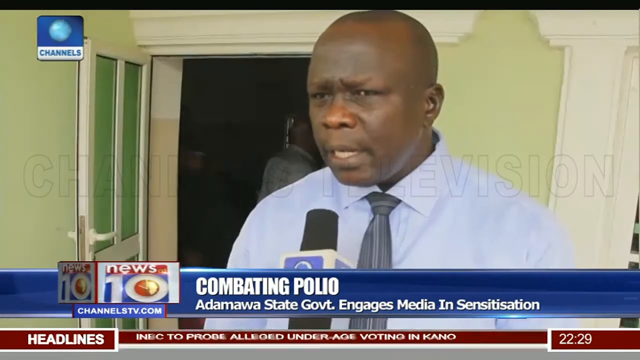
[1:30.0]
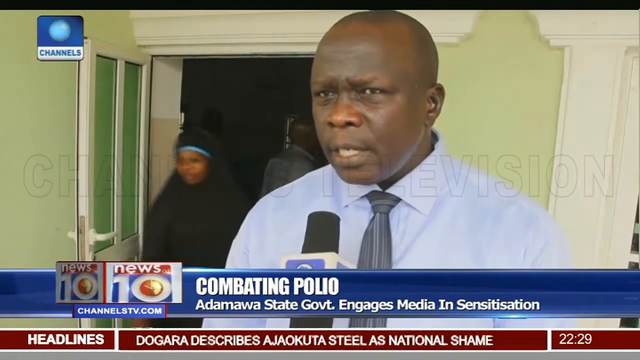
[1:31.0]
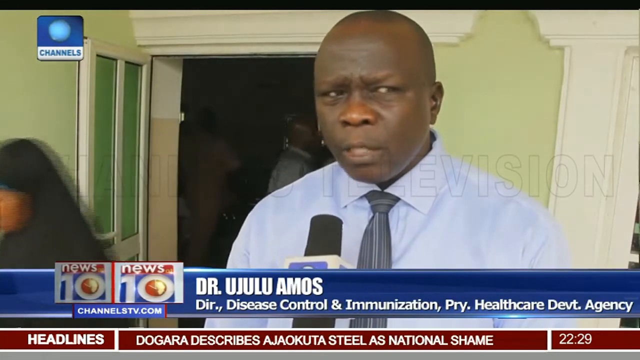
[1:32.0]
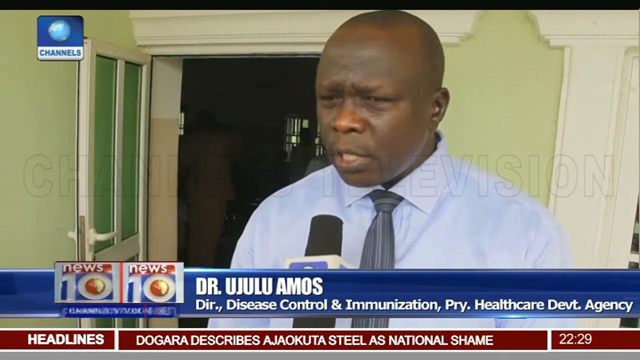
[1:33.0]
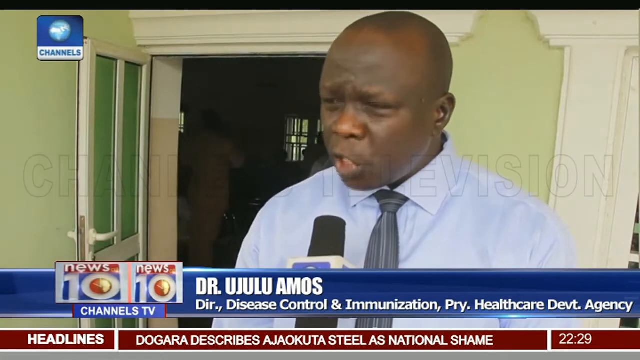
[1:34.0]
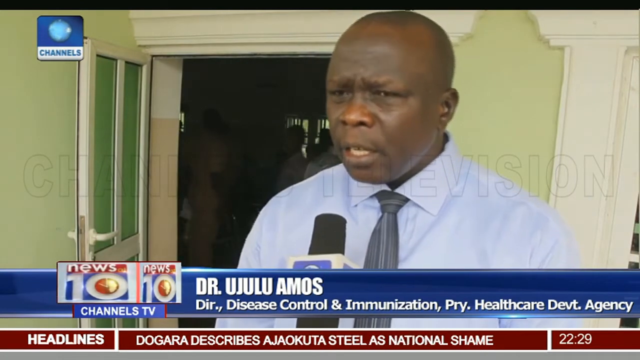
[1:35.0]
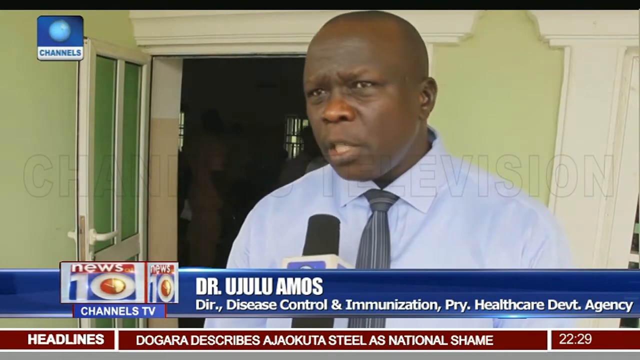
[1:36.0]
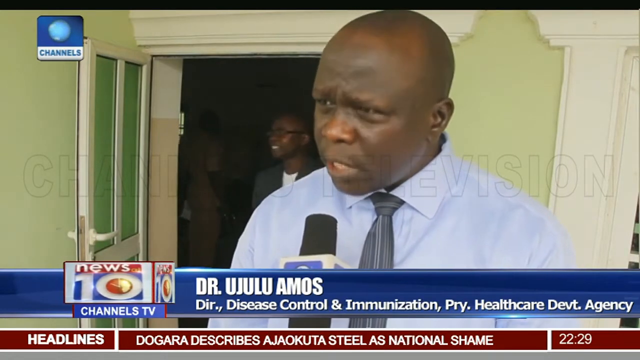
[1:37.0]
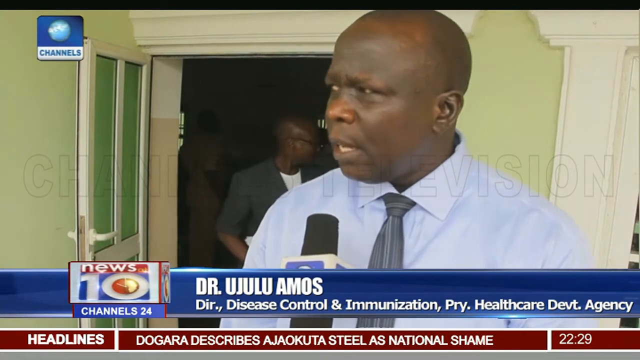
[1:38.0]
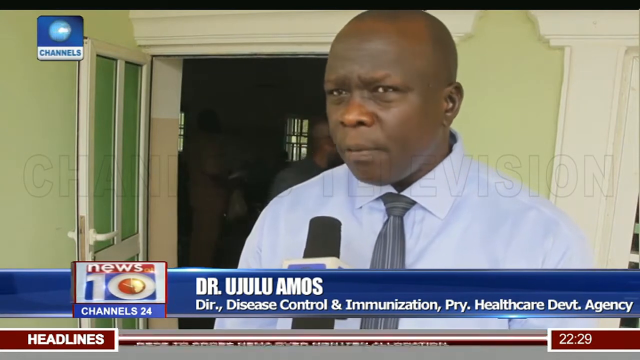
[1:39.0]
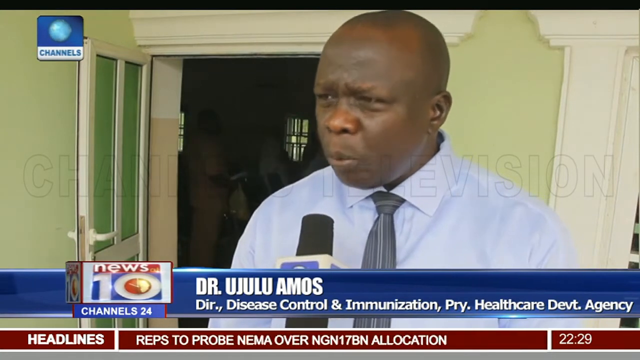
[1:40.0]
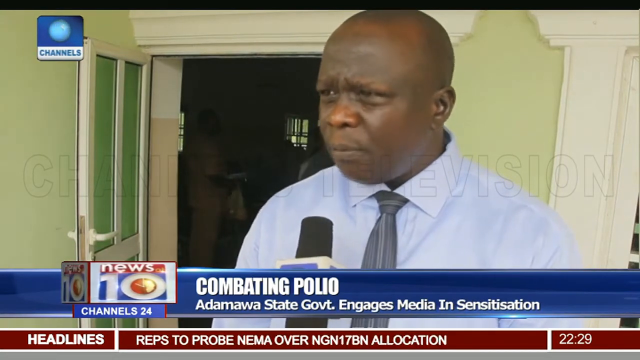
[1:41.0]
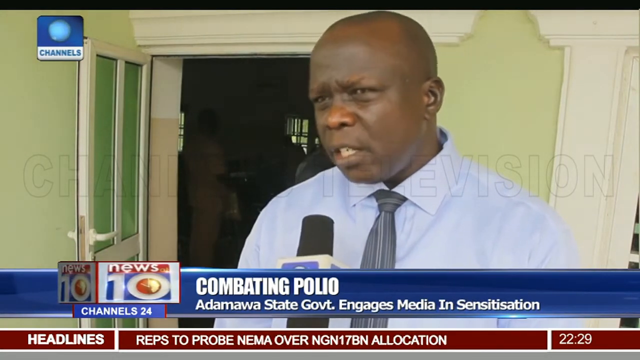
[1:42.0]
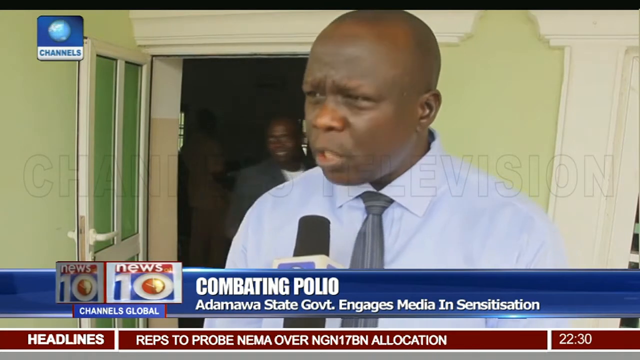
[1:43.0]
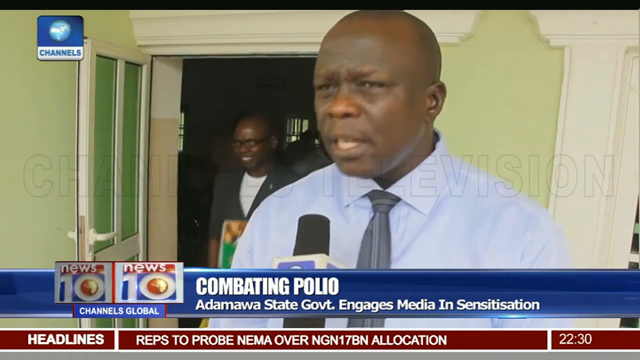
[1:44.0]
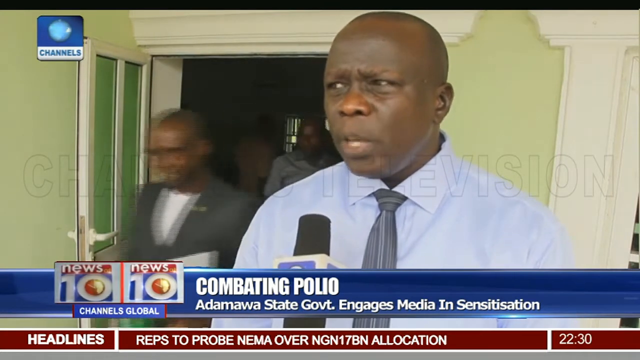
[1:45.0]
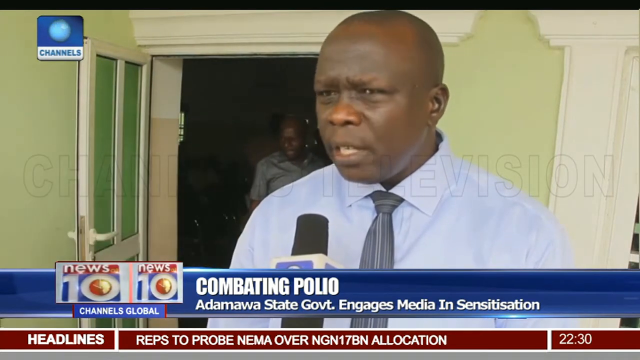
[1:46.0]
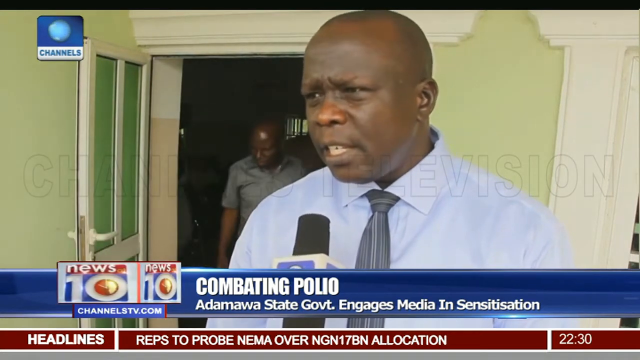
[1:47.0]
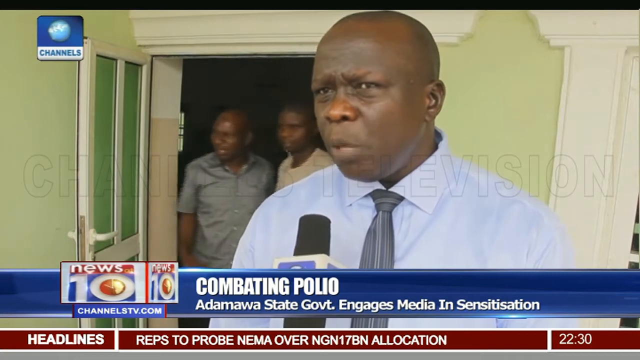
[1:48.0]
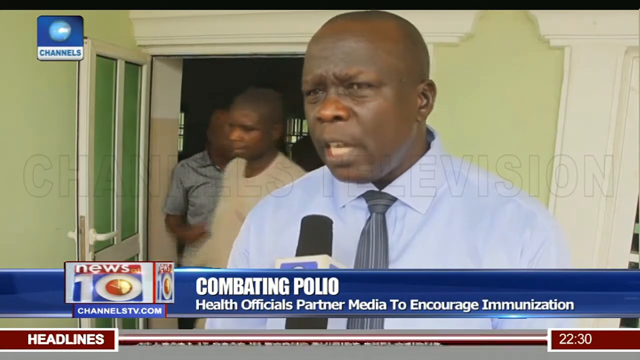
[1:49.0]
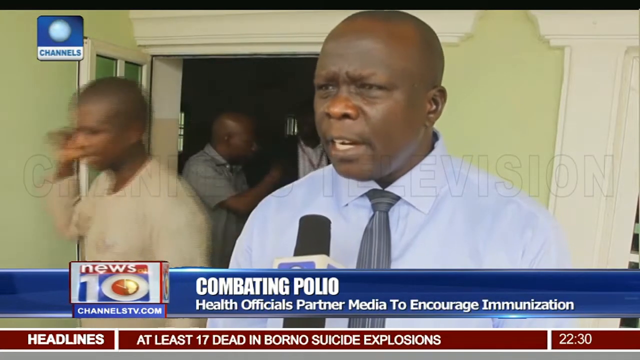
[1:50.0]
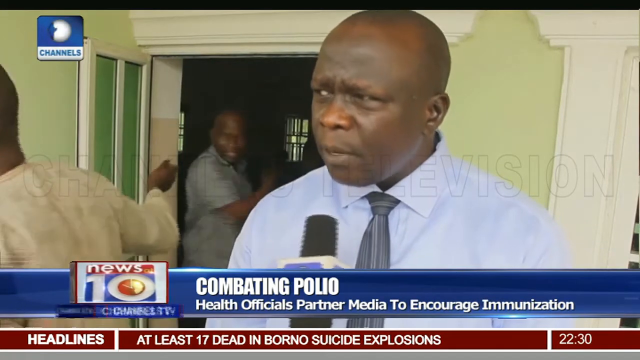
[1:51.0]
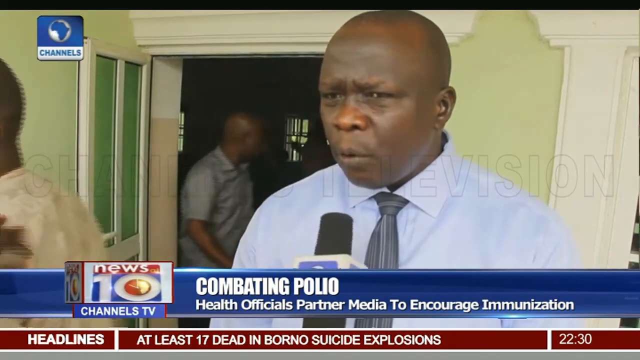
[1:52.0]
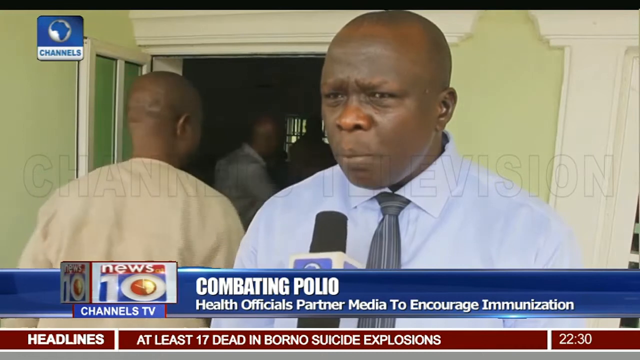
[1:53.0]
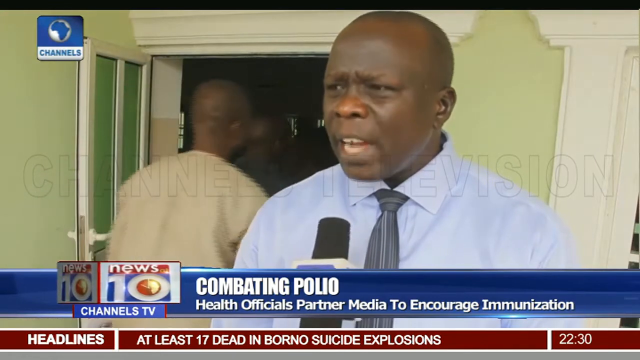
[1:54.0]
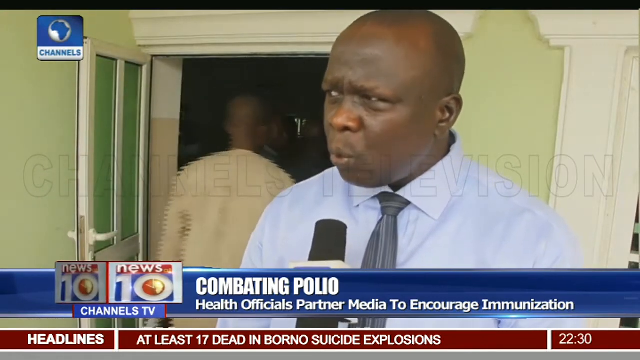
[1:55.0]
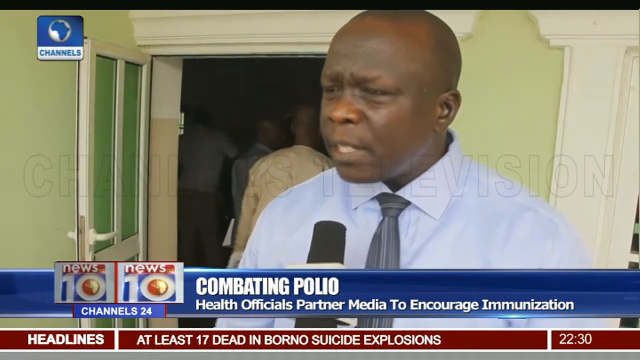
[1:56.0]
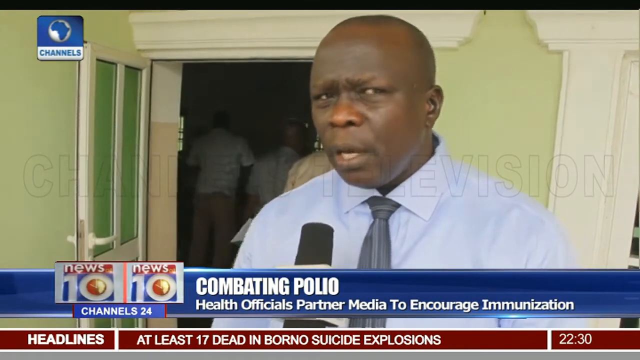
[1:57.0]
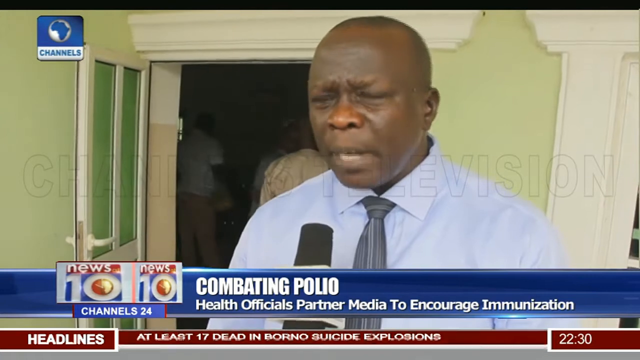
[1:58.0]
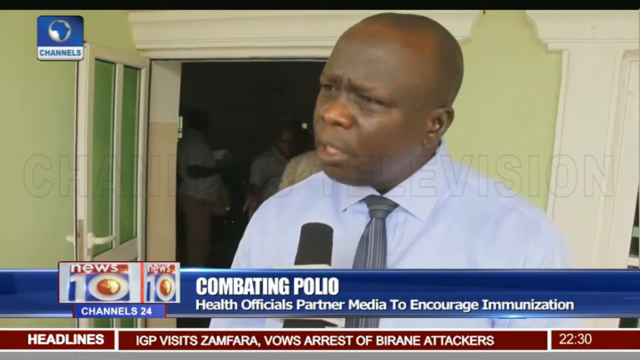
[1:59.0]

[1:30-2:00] A man talks to reporters; he is Dr. Ufolu Amos, director of Disease Control and Immunization from the Pemari Healthcare Departmental Agency. People come out of the conference he was addressing, coming and going. The report is from News 10 and concerns the Damoha state government, which engages in sensitization.